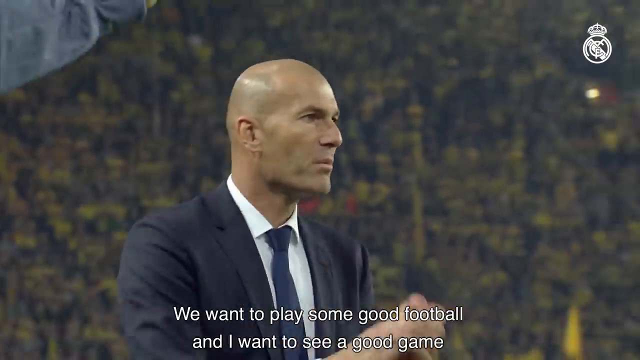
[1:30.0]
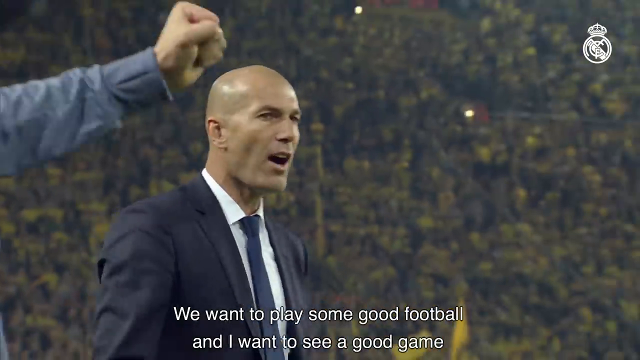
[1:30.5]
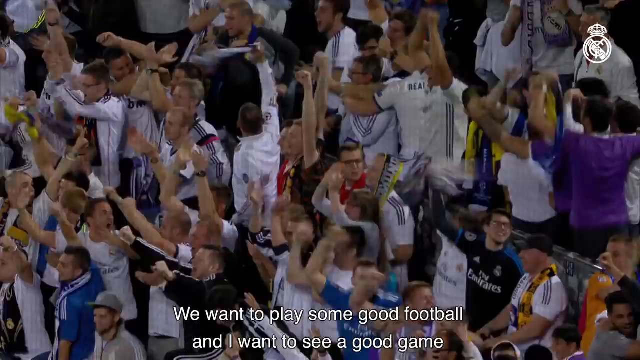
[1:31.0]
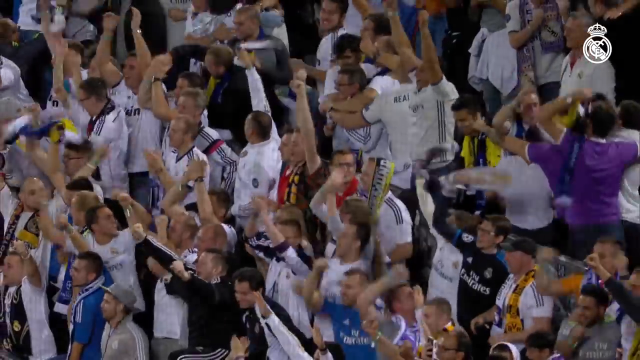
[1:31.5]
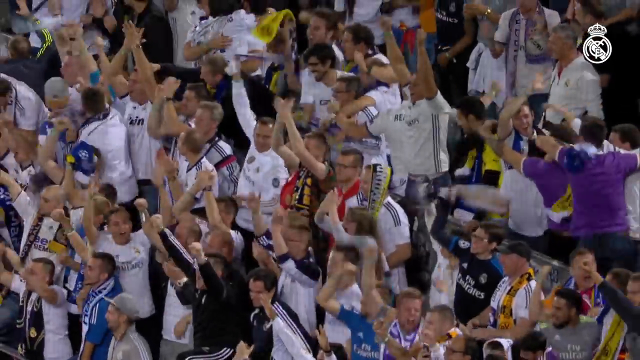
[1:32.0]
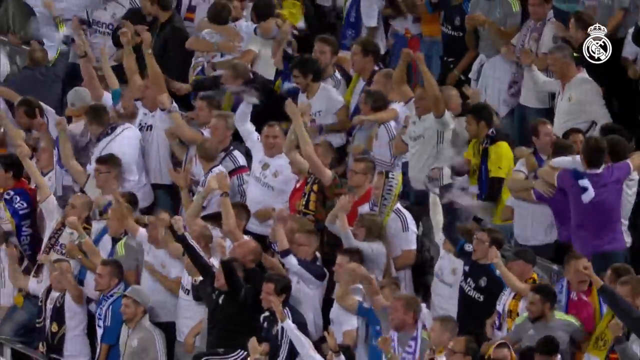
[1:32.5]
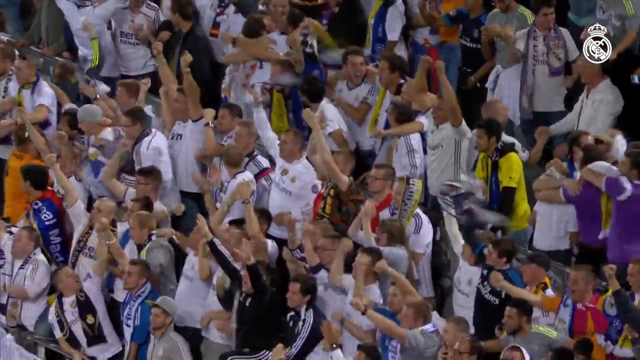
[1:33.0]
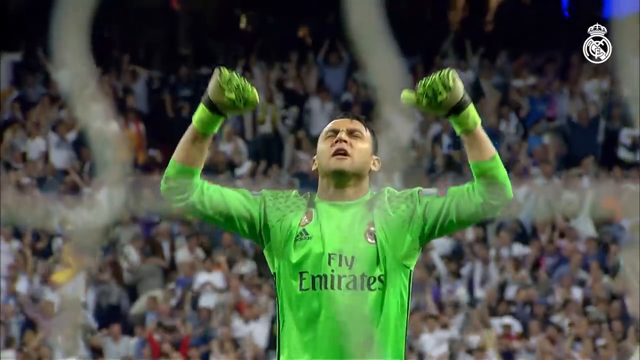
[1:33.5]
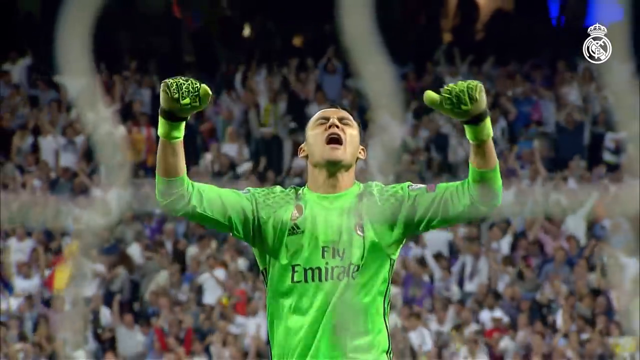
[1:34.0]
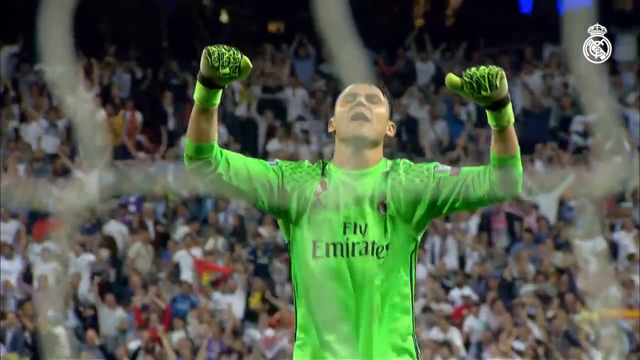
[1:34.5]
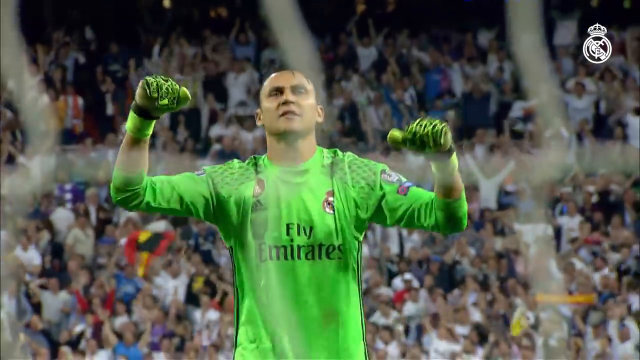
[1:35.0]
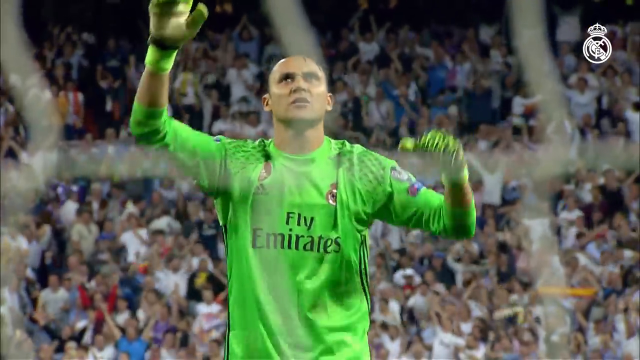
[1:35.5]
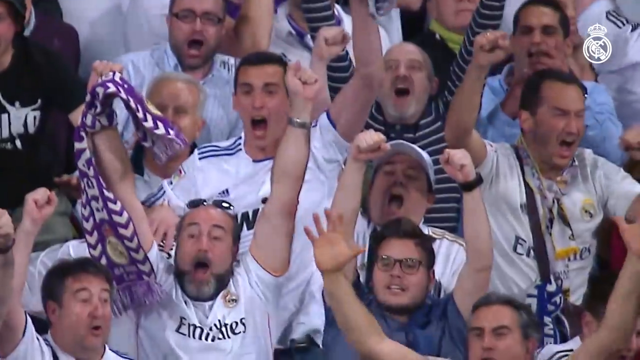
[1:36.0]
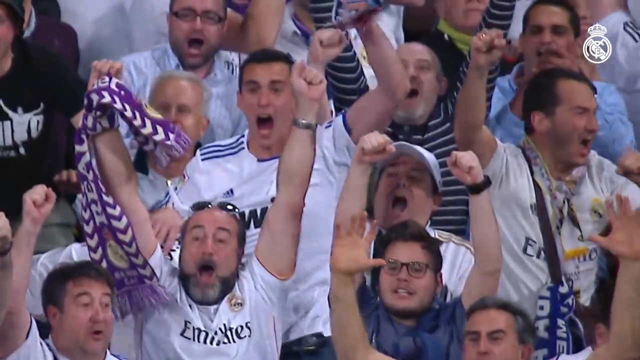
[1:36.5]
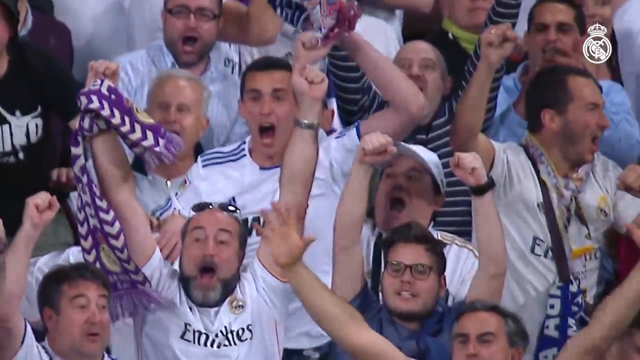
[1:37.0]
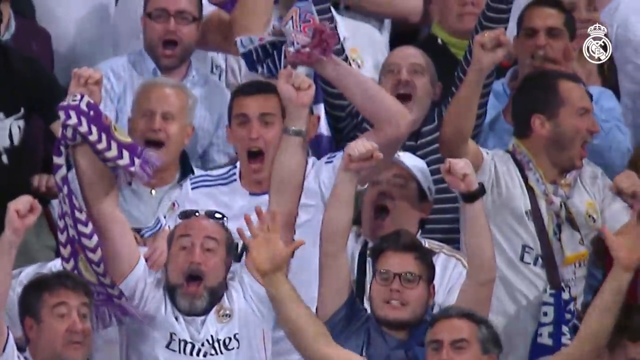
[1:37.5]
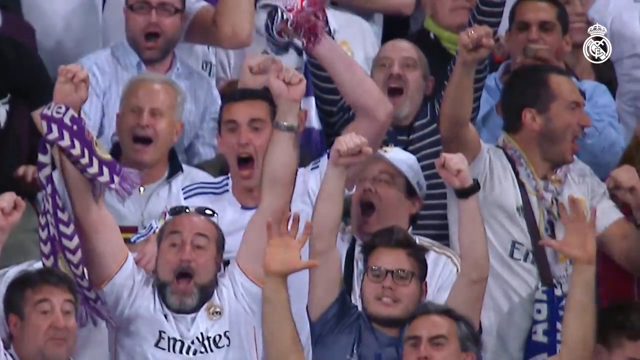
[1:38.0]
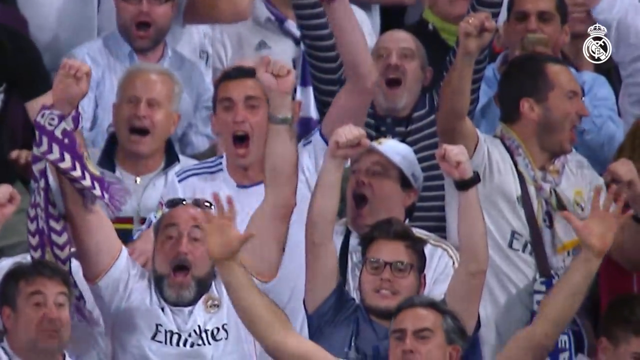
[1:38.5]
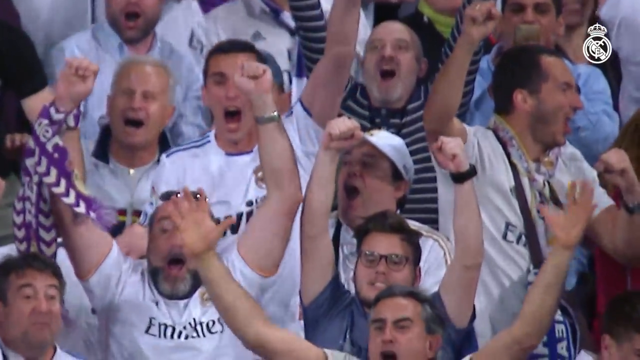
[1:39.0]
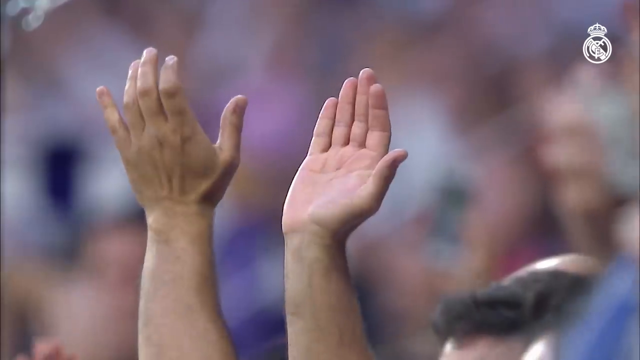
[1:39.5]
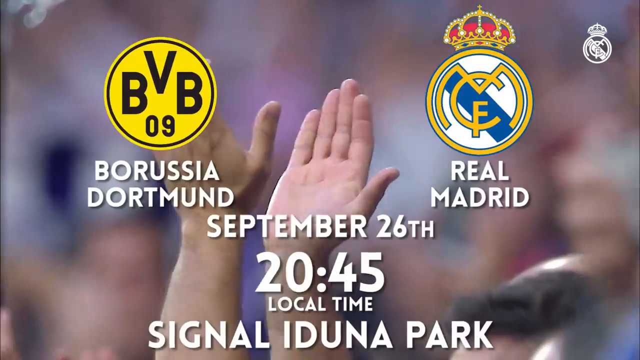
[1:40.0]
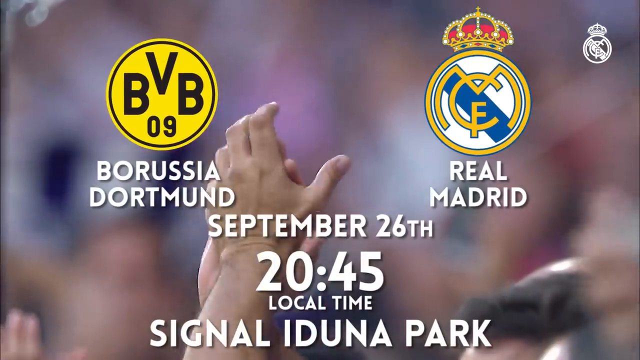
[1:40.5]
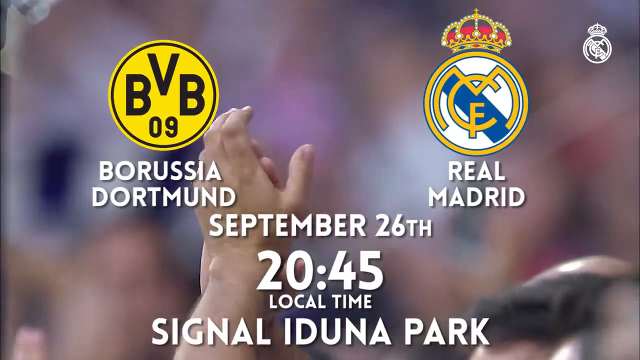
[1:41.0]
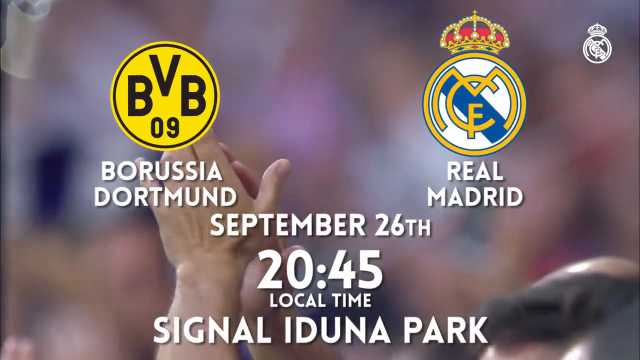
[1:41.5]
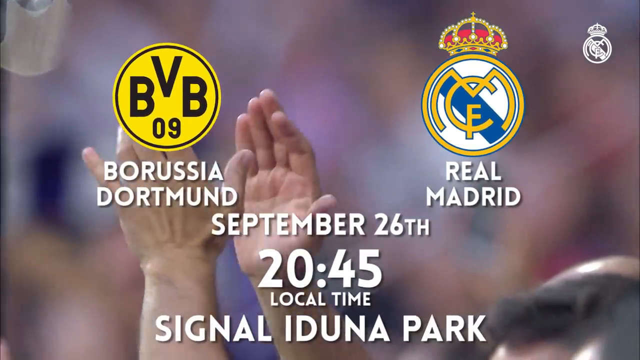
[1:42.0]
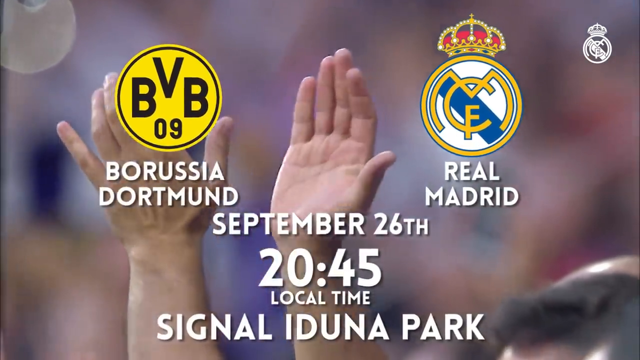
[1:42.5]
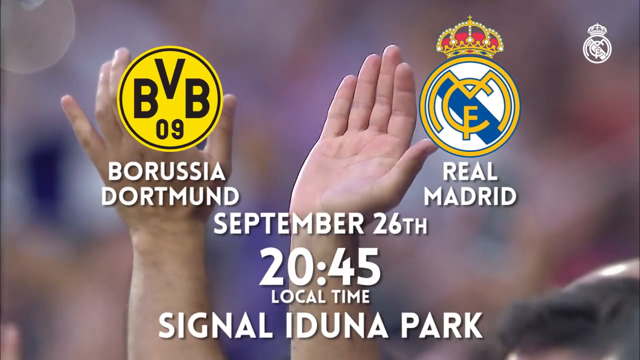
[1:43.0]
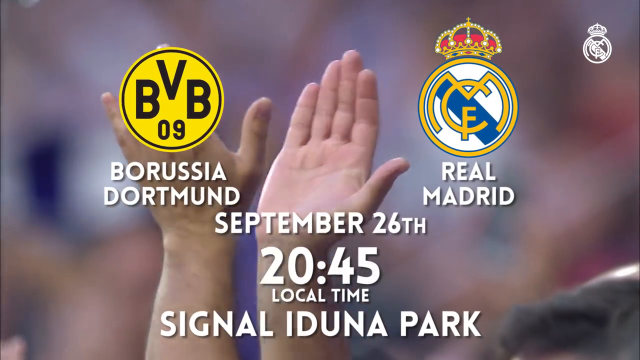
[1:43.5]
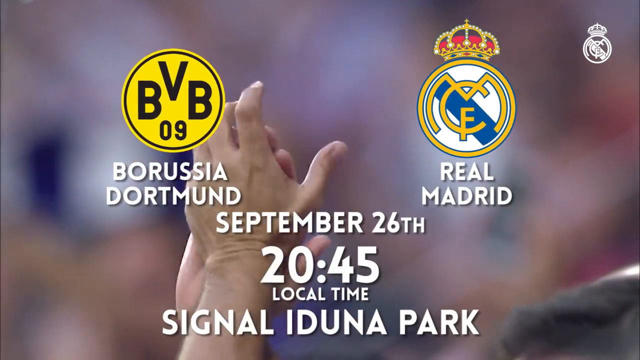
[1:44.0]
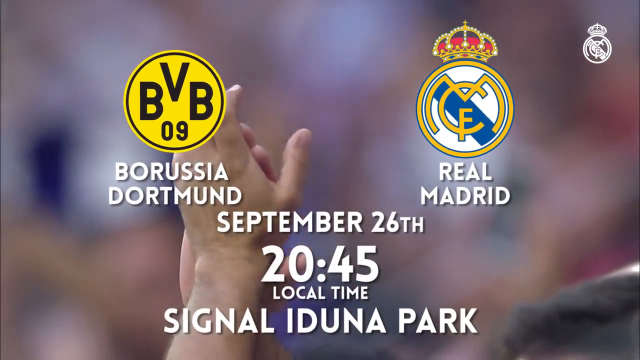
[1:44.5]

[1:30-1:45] More clips show fans celebrating. The goalie celebrates; he wears goalie mitts and a green jersey, and his mitts are green as well. More fans celebrate, looking extremely happy and high-fiving. The video ends with a graphic that takes up most of the screen. The text says "Borussia Dortmund", and on the right it states "Real Madrid". Towards the middle, the text states "September 26th, 2045 local time, Signal Duna Park". The background of the graphic is a close-up of two fans giving each other a high-five.